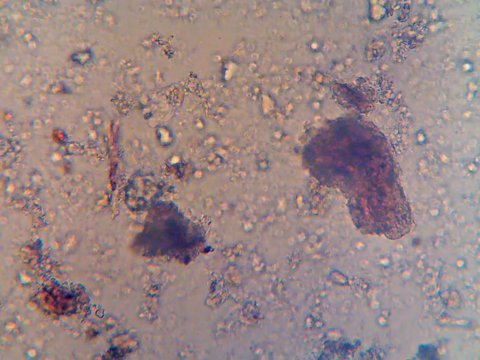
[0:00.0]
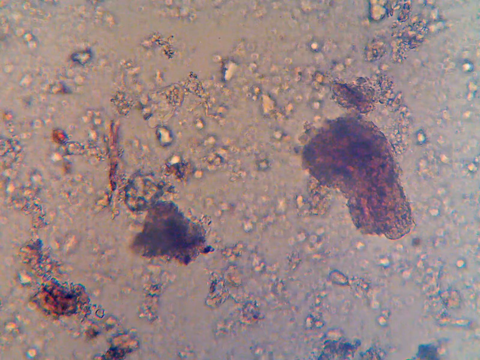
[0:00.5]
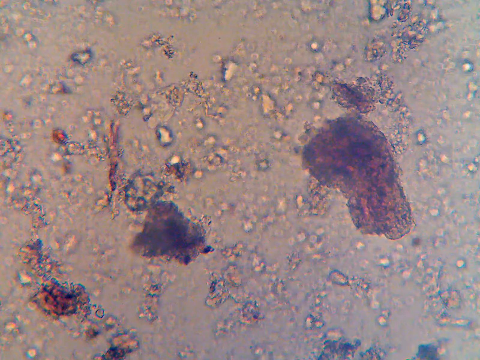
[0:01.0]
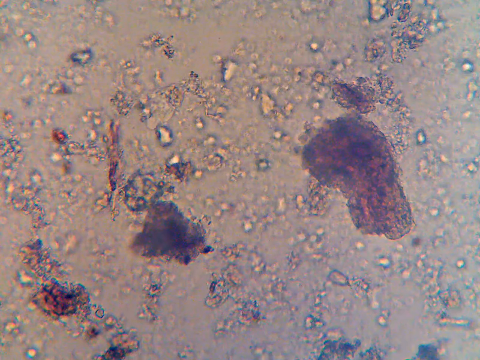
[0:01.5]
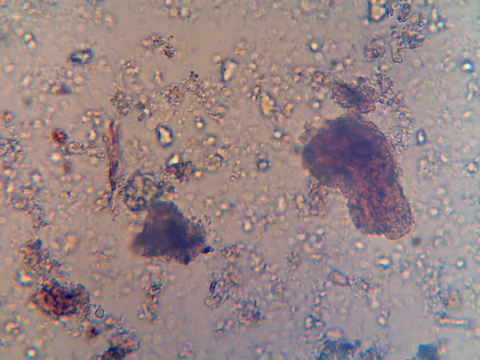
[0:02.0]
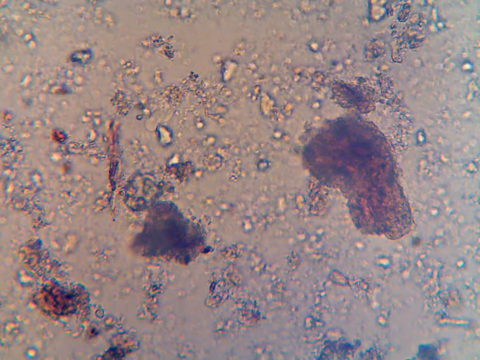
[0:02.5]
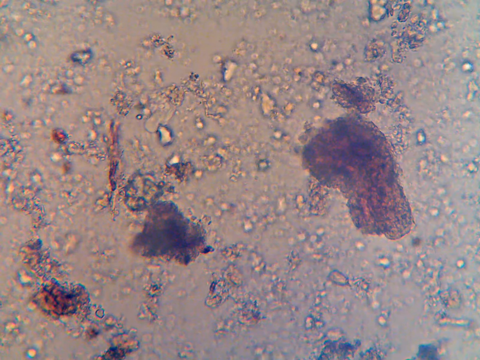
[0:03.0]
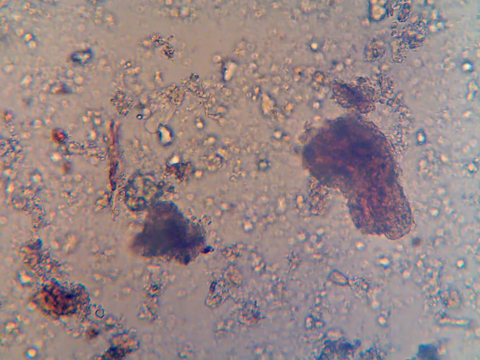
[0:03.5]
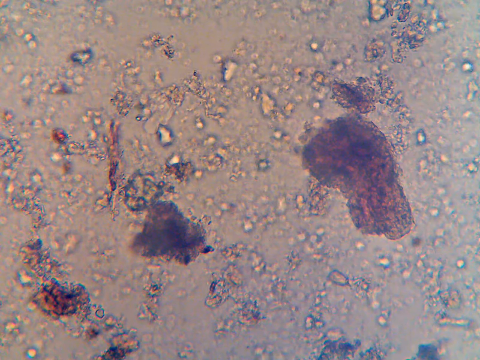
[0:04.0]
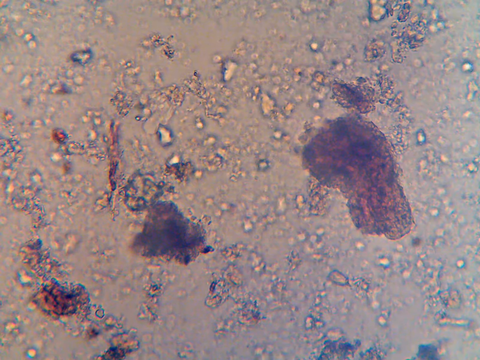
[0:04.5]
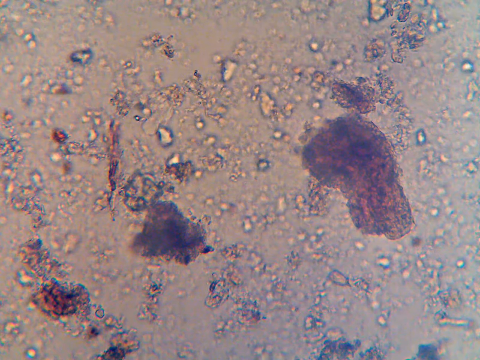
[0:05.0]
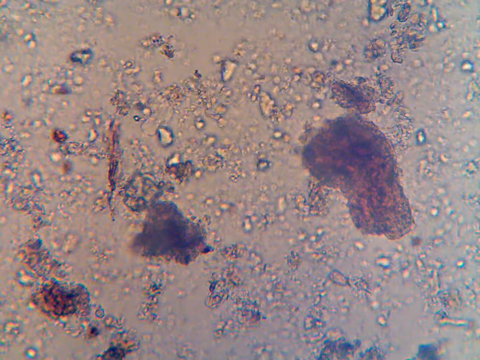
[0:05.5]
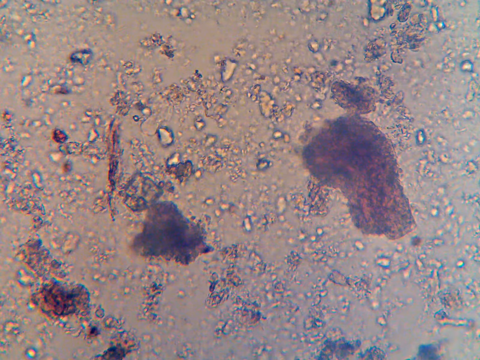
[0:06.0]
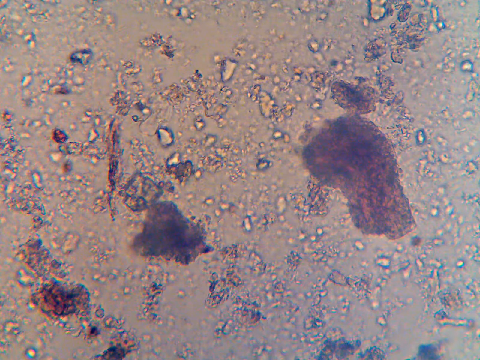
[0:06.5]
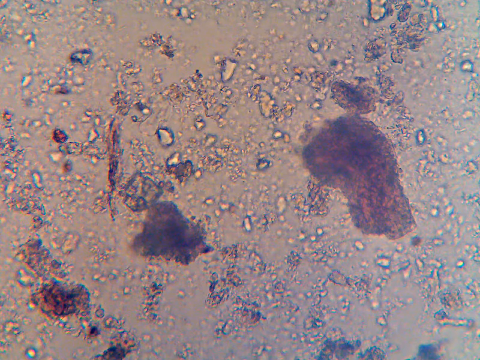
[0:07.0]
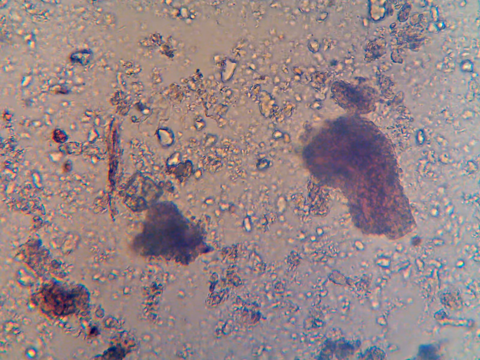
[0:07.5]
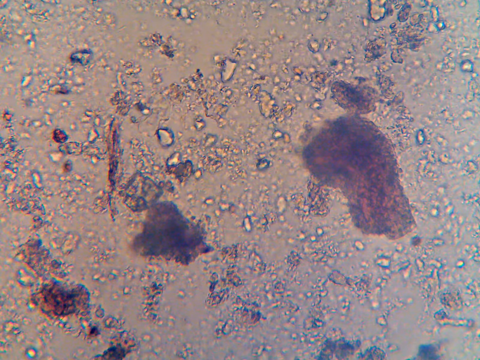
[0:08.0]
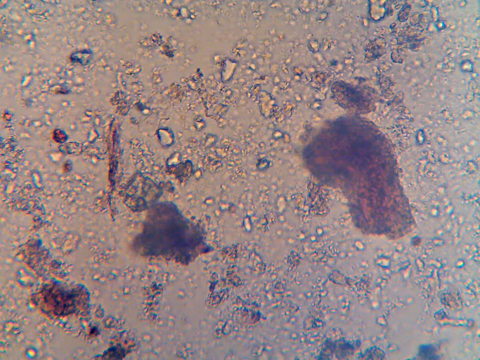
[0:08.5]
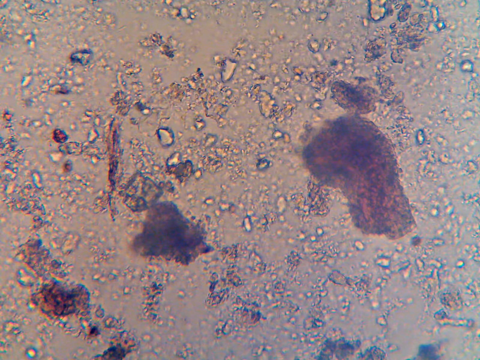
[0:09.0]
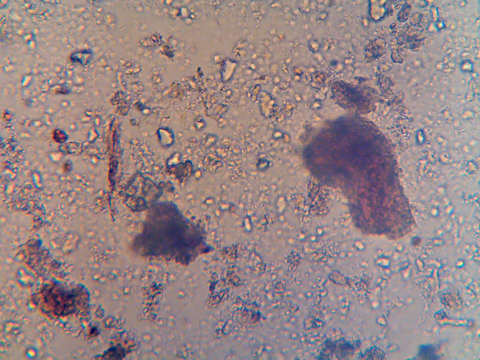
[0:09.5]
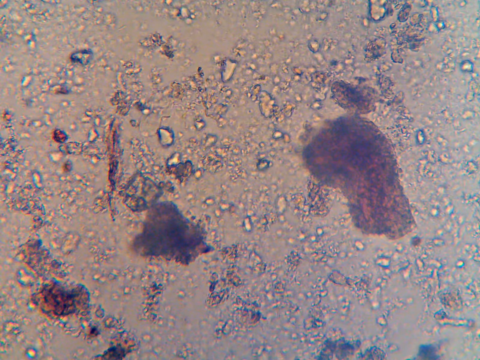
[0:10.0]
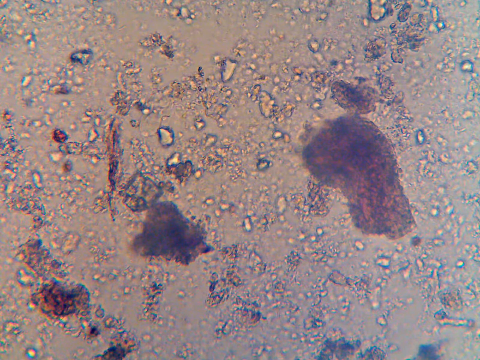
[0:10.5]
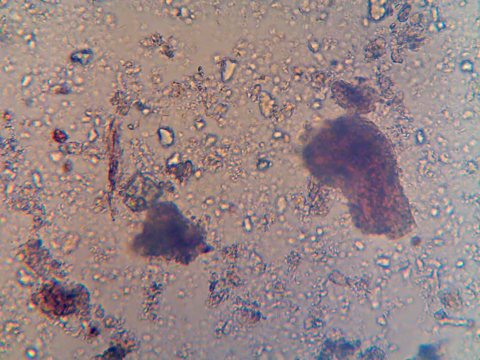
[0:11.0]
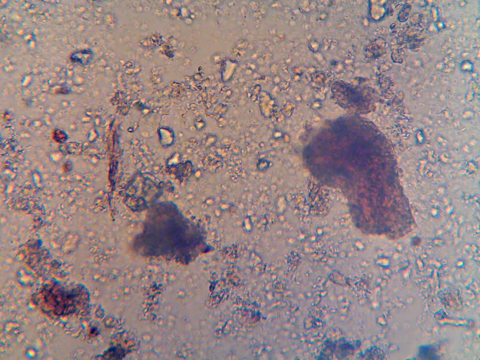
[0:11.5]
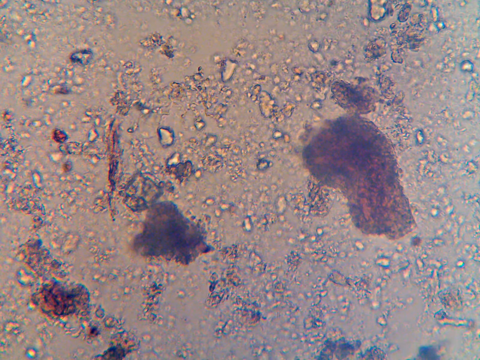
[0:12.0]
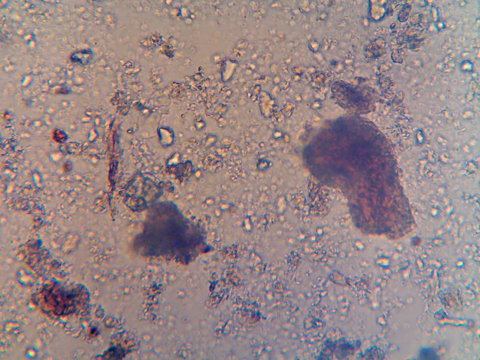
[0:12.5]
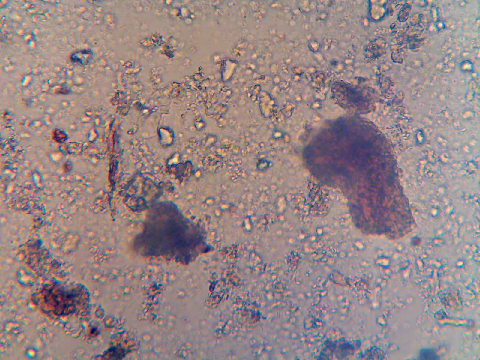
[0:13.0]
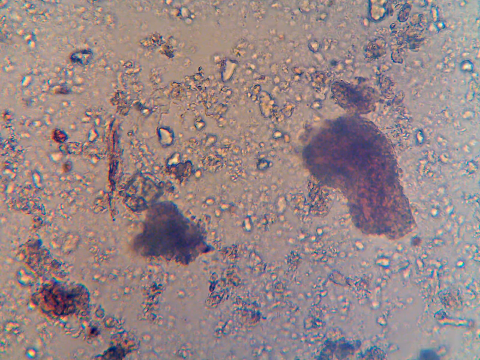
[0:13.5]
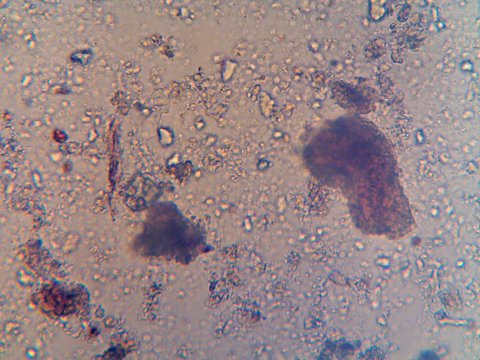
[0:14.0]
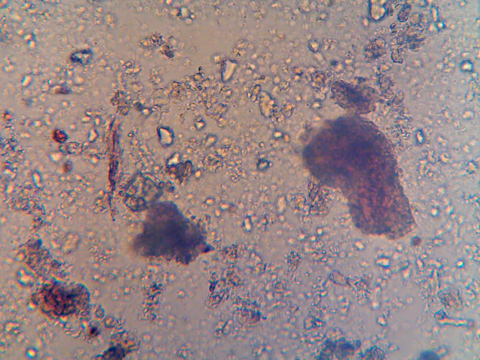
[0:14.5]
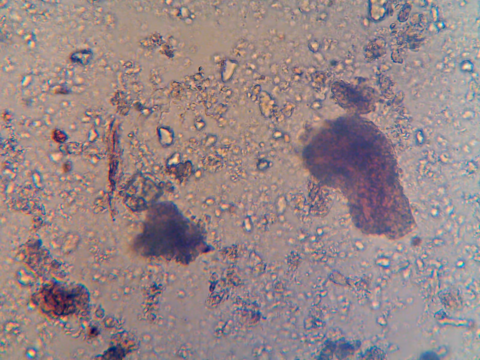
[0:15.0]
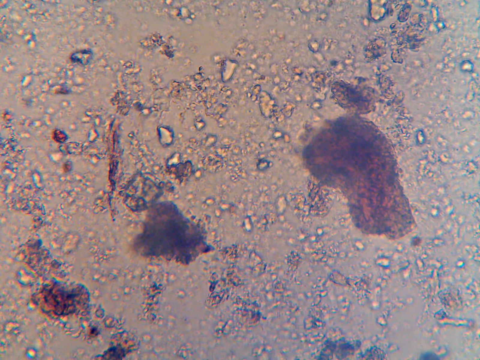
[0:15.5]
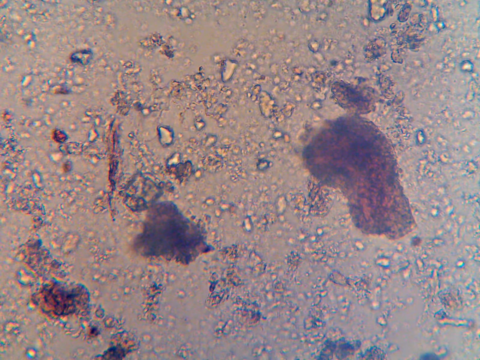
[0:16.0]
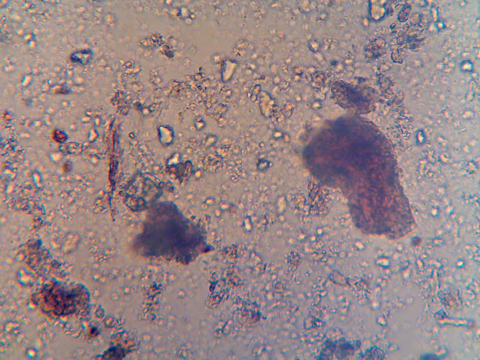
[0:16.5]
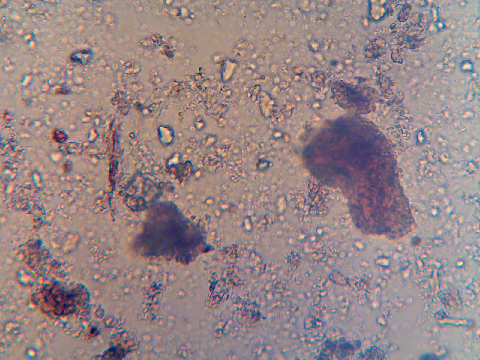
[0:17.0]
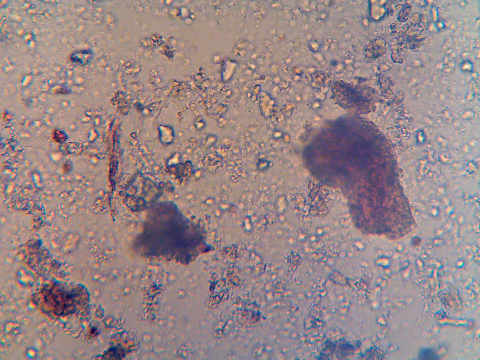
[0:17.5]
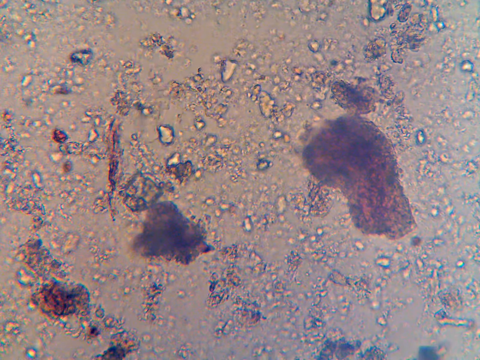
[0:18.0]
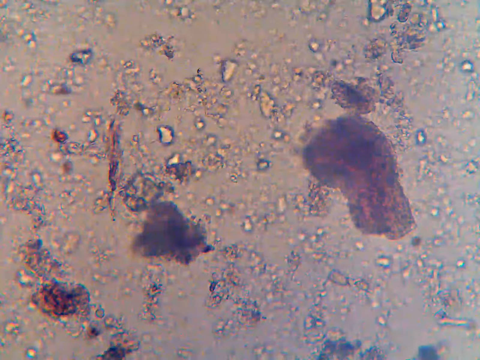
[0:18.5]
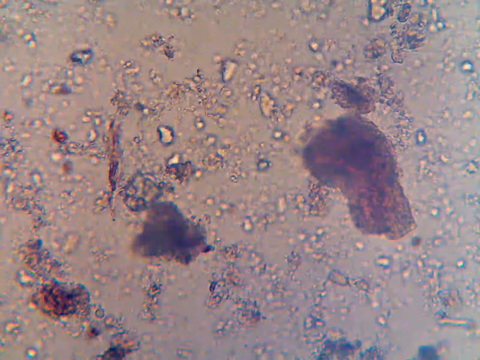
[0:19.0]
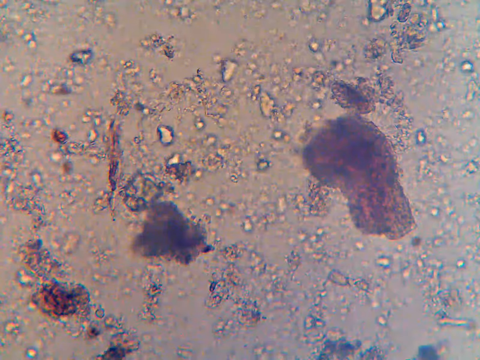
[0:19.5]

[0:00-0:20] The video opens on what looks like a microscopic image of a sample: many roundish shapes in beige-ish to brown colors on a beige background. There is very little movement. The microscope seems to be coming into focus, with some of the bigger blobs getting sharper while the smaller blobs stay out of focus. At first there are slightly more odd shapes, and the image appears to get clearer as time passes, apparently because the recording device is changing settings rather than anything in the sample changing. The largest blob is on the right of the screen; it is almost purplish and looks maybe like a big bean. Another large blob in the lower left looks slightly more triangular.